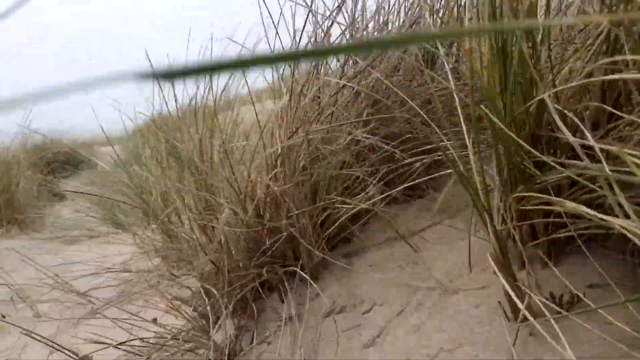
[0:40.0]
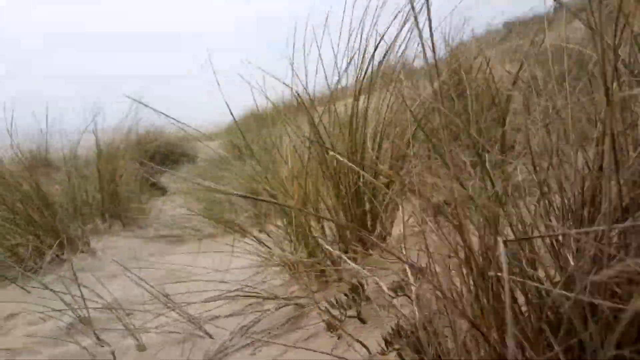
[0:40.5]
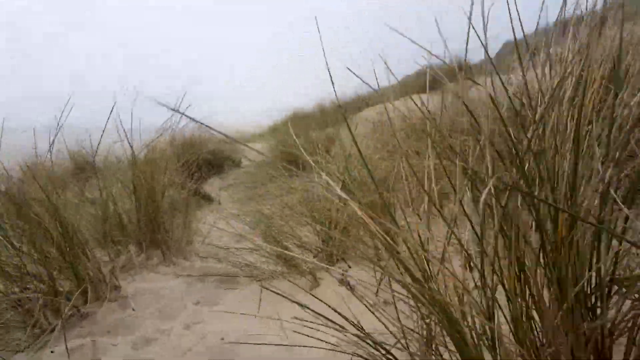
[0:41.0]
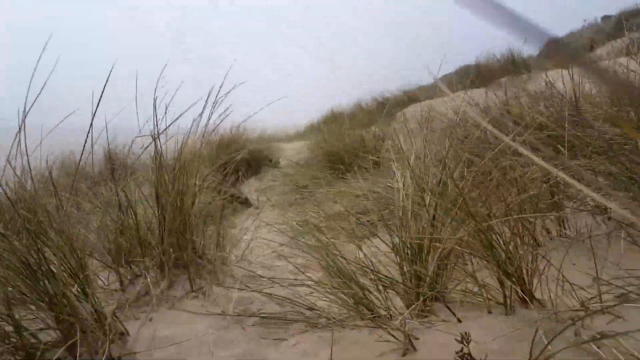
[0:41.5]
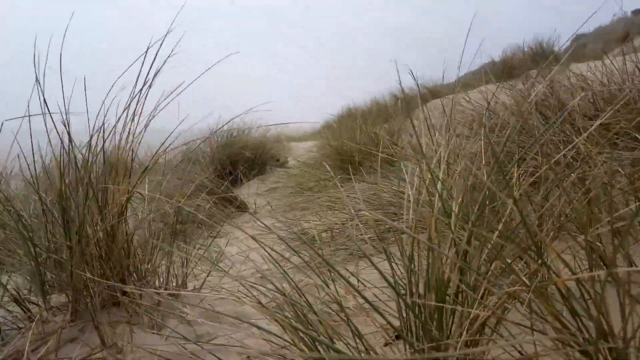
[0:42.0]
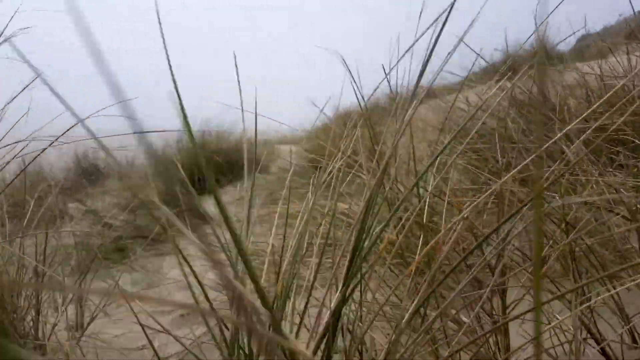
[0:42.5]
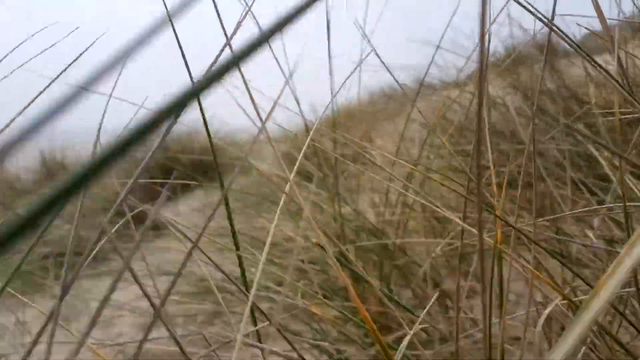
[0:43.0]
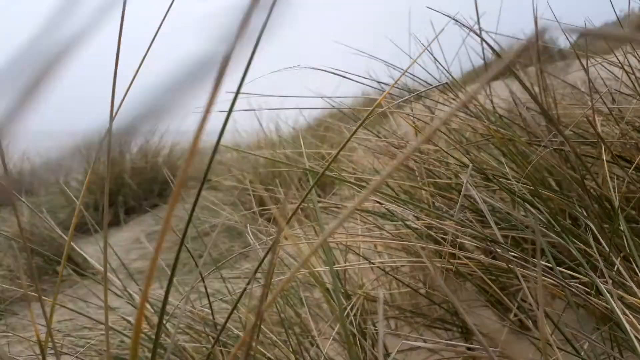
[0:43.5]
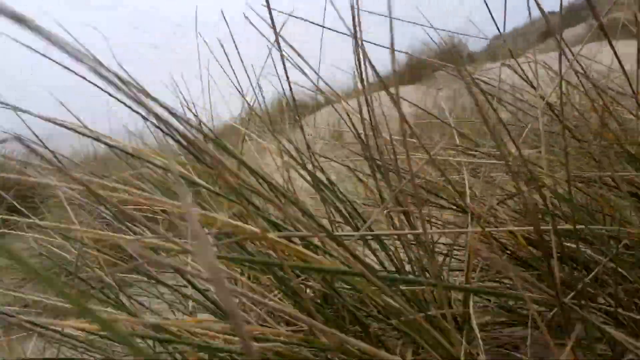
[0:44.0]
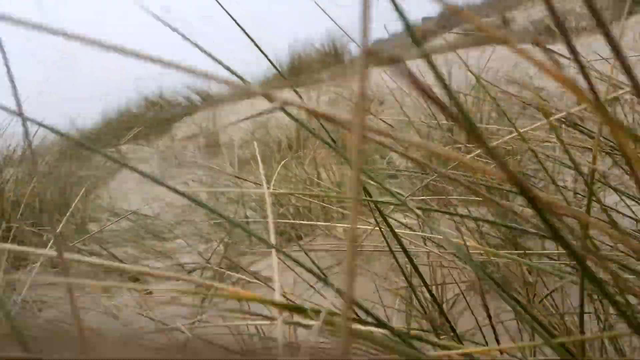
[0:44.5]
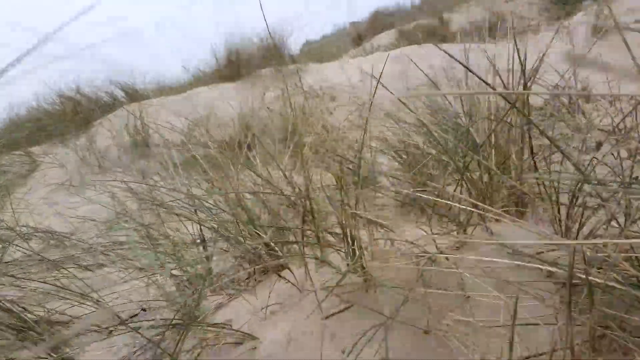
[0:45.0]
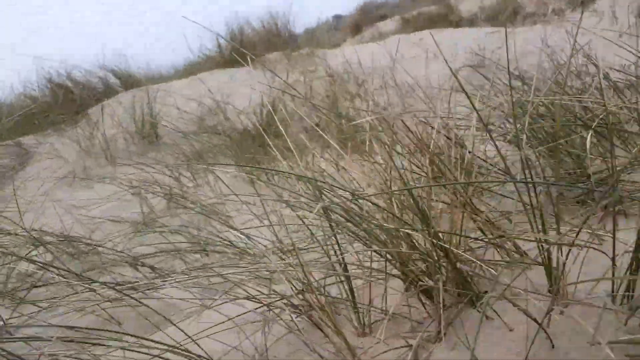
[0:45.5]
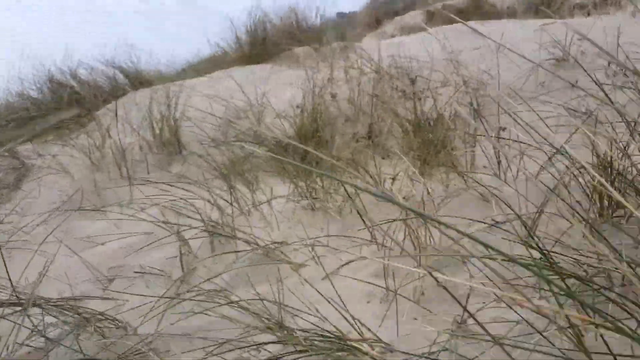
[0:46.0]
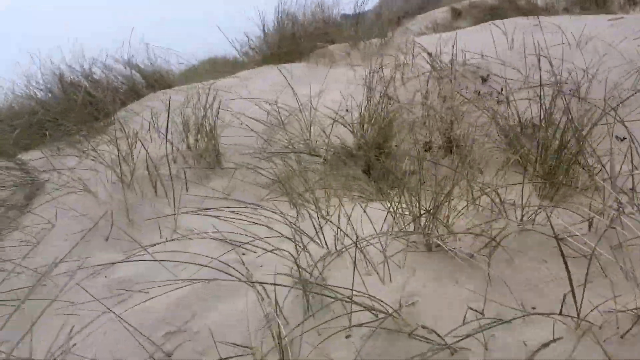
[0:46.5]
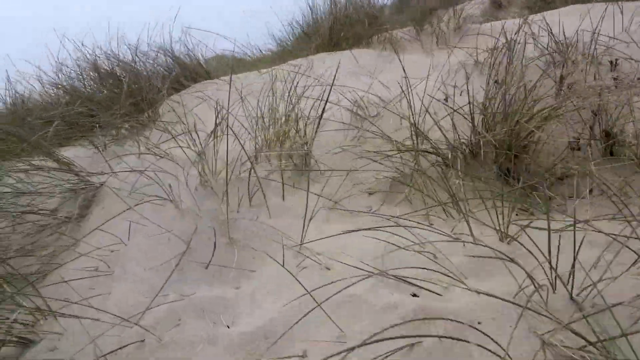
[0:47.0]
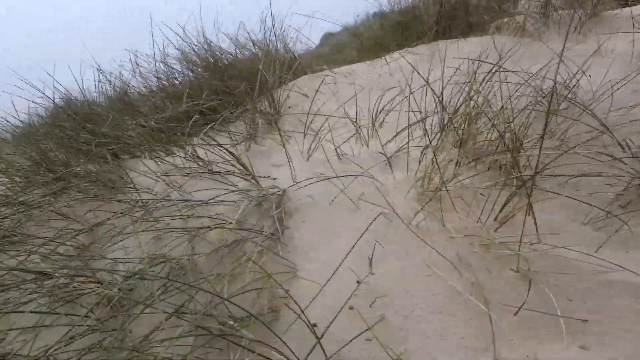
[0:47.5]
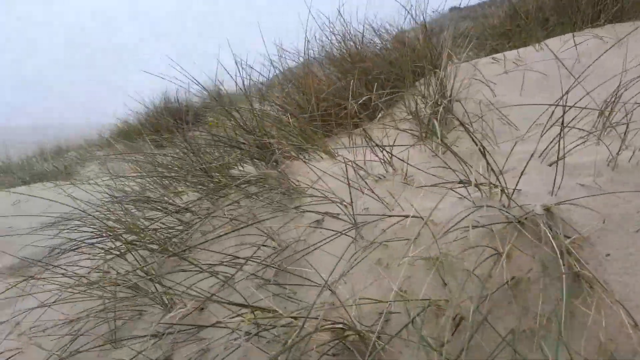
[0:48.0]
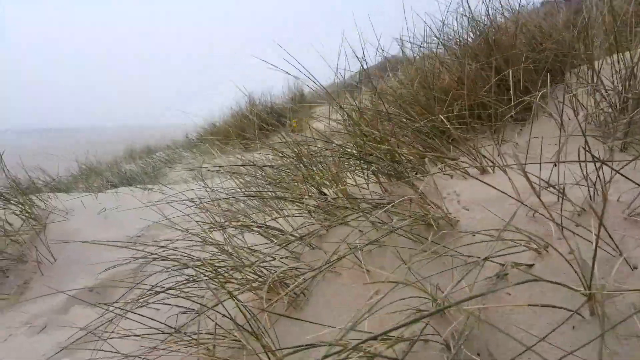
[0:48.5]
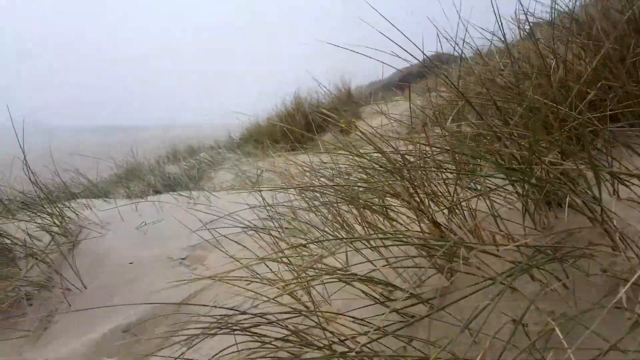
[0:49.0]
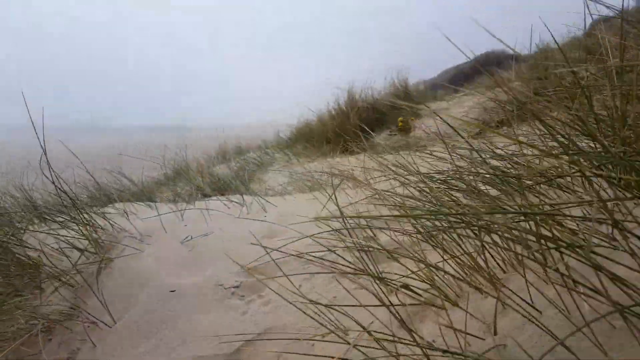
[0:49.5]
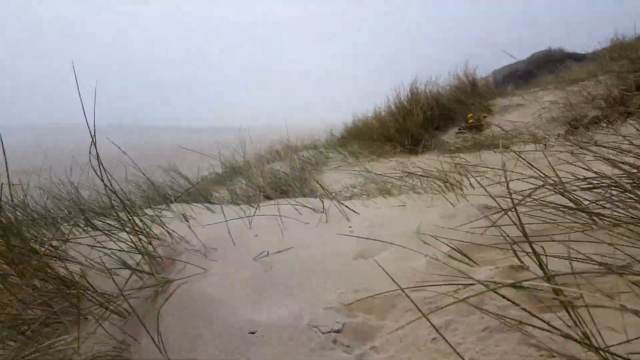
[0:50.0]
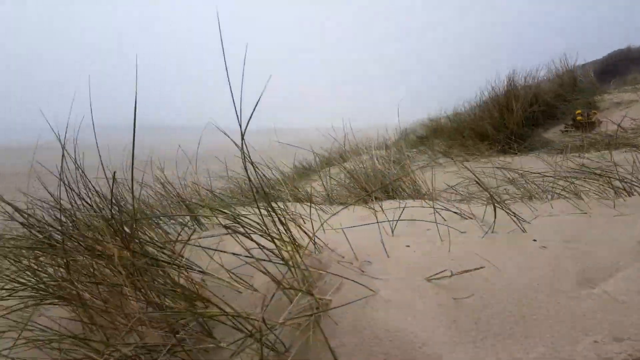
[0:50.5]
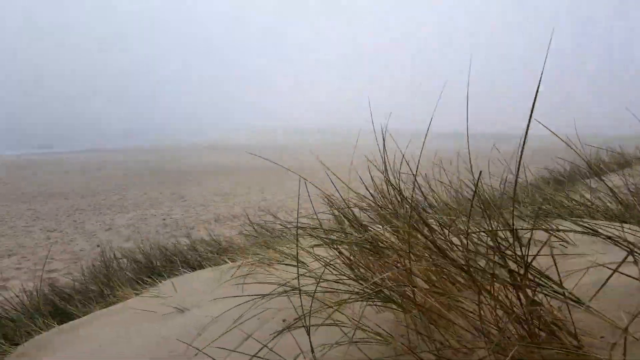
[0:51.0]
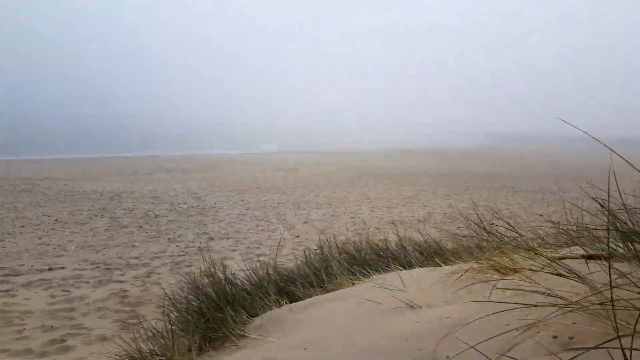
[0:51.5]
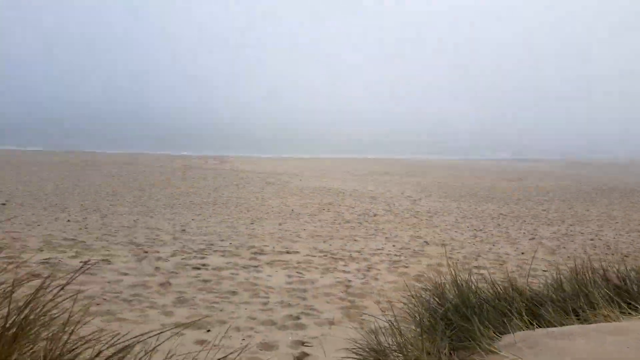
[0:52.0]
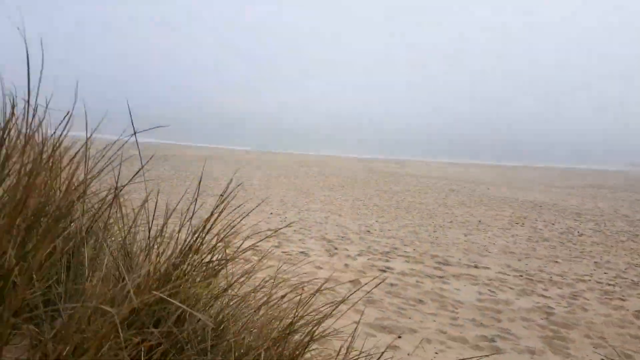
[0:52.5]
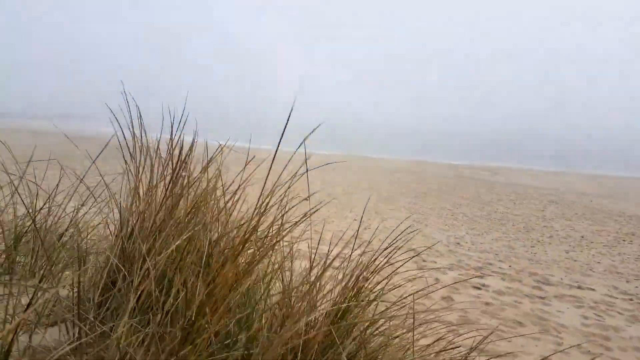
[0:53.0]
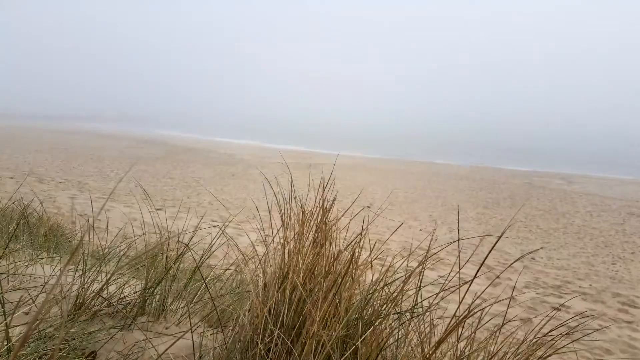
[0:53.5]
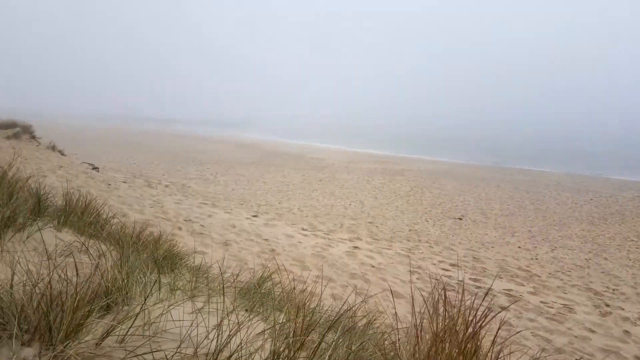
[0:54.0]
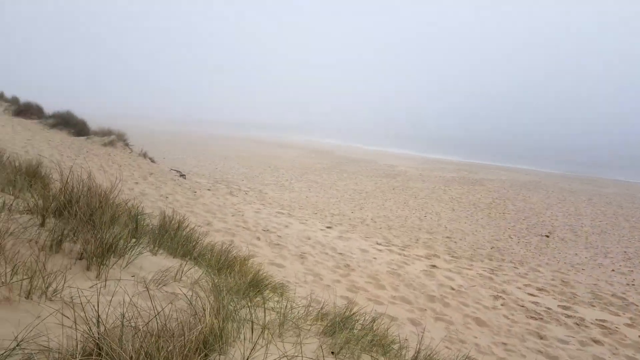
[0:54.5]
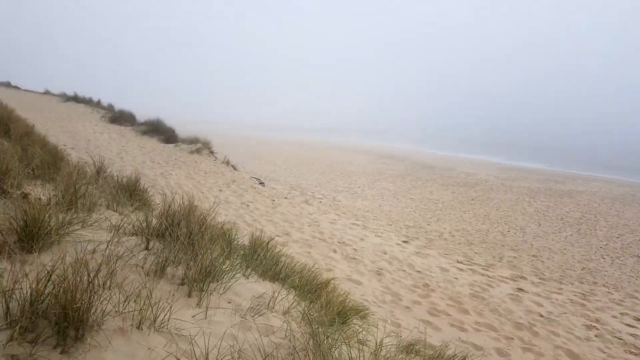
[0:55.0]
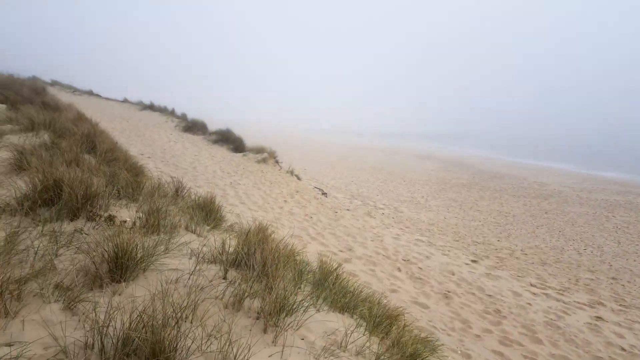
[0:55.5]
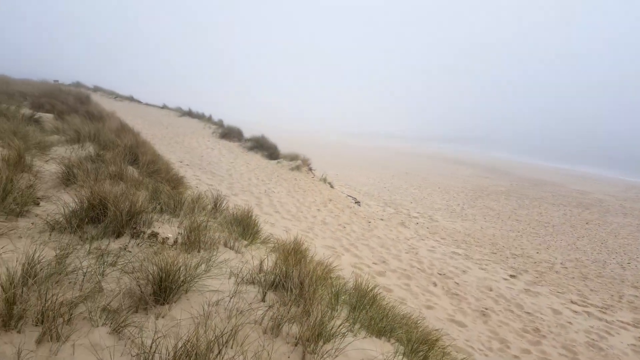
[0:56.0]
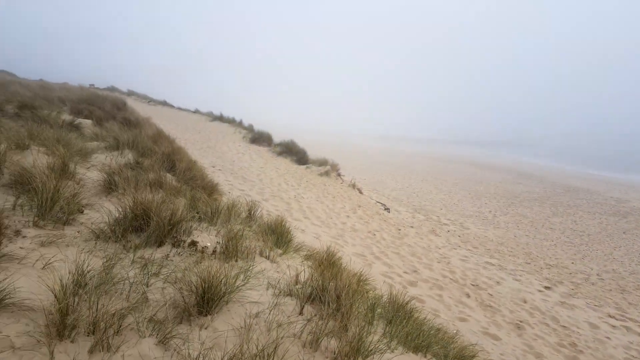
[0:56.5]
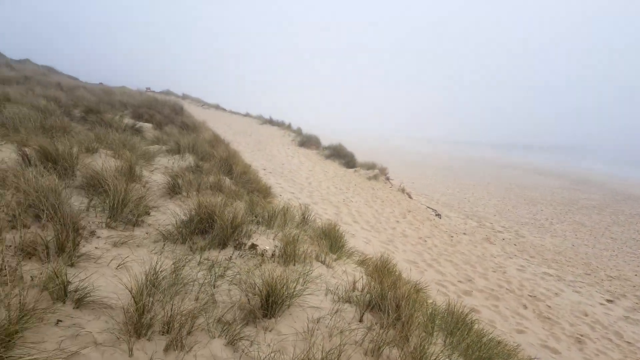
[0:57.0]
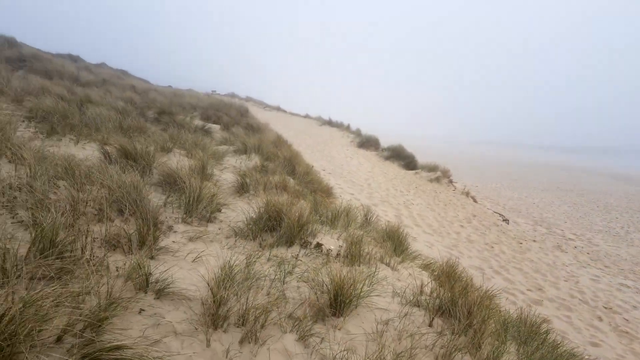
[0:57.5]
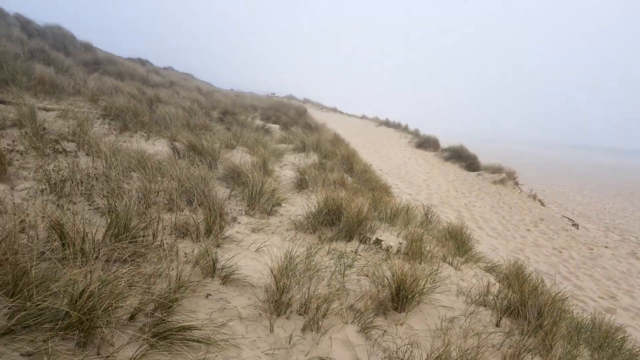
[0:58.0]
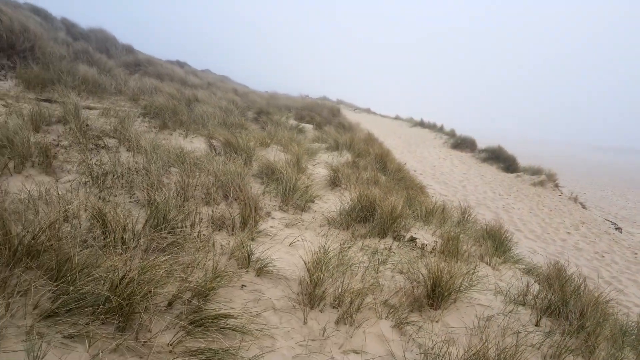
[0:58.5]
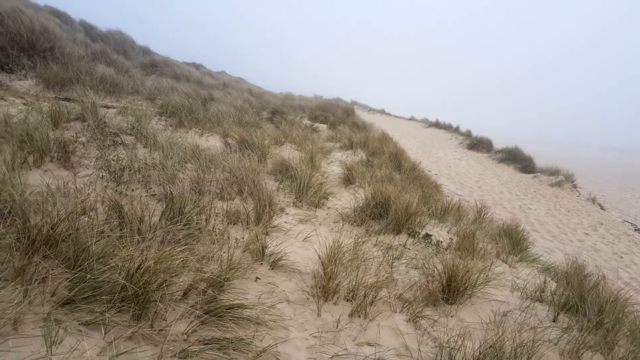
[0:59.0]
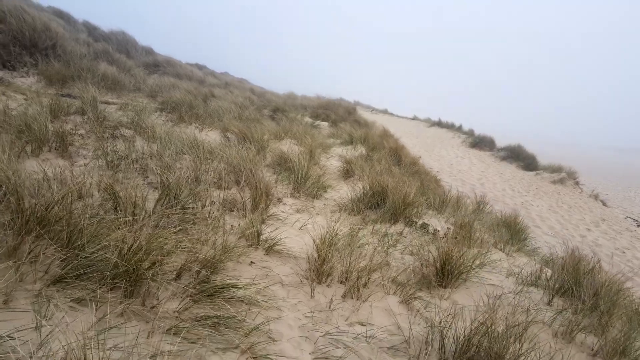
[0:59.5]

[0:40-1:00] The camera moves quickly through the vegetation on the sand dune, grass blades hitting it as it moves closer to the sea. The view sways to the left, showing a glimpse of the sea: a very calm, almost still surface with a white outline of waves. The cameraman gradually rises from his crouch, giving more of a top view of the area. The focus remains on the sand dunes and vegetation, with beige, withered and some green grass blades and tufts gently swaying in the wind. The seashore is filled with little bumps of very light grey fine sand, with nothing in sight aside from the occasional grass tuft.